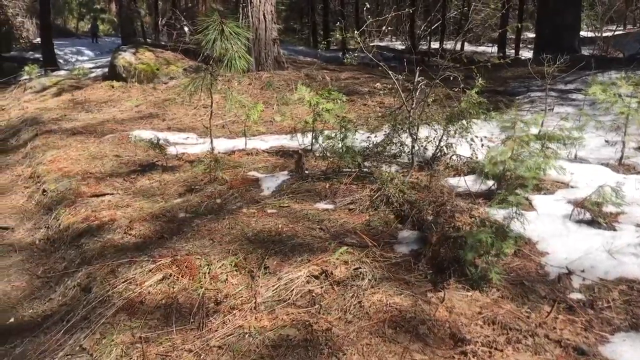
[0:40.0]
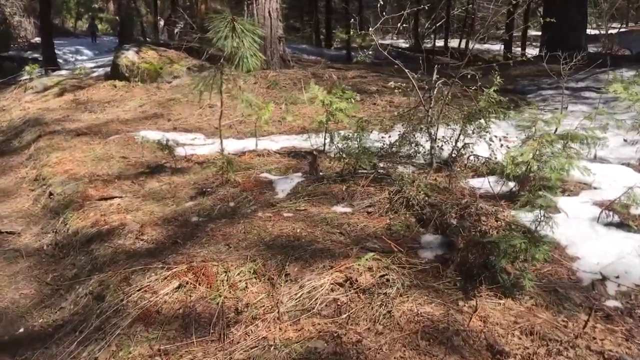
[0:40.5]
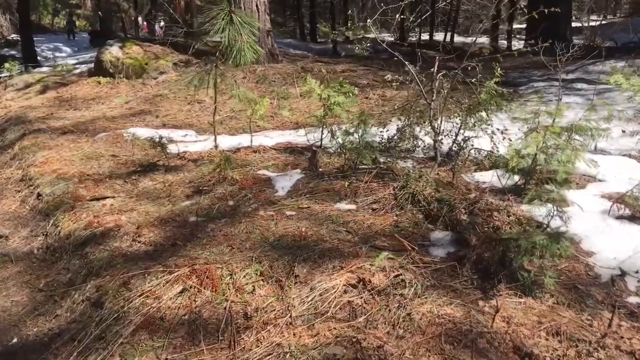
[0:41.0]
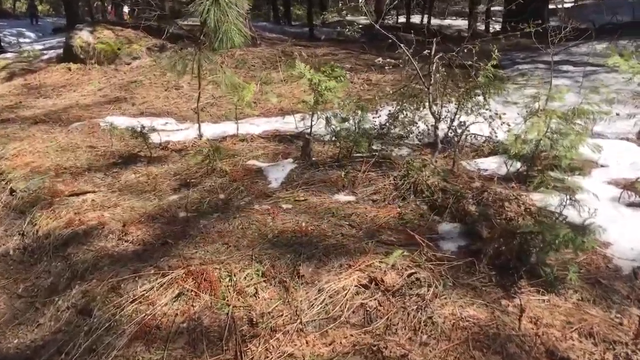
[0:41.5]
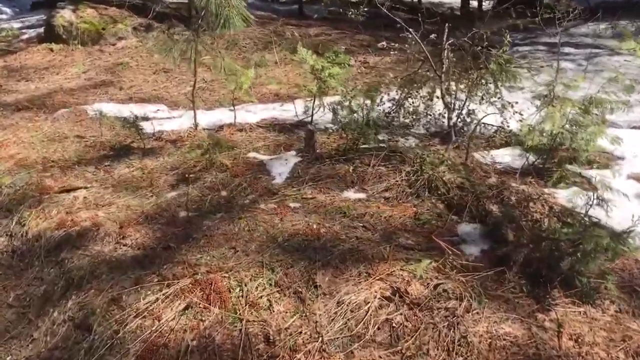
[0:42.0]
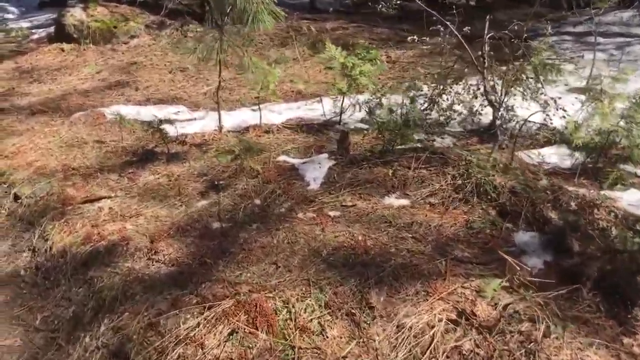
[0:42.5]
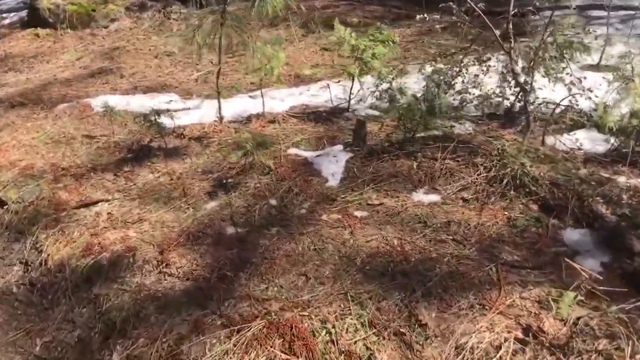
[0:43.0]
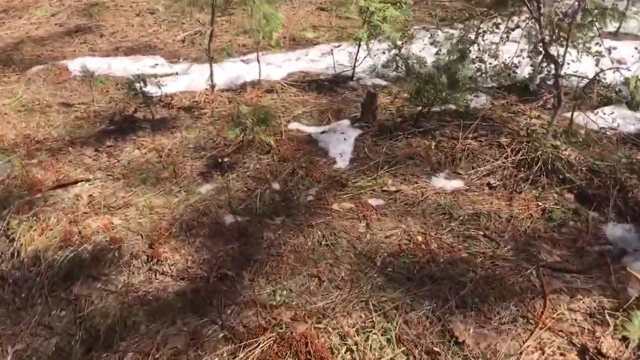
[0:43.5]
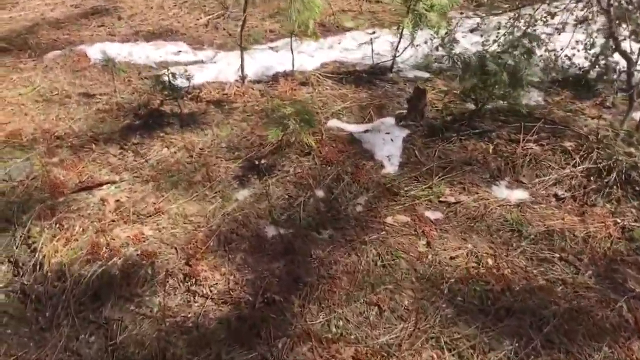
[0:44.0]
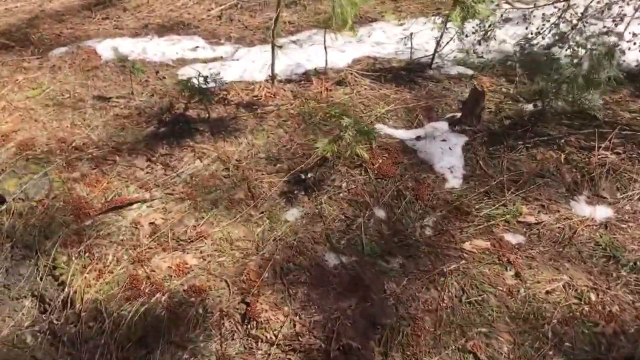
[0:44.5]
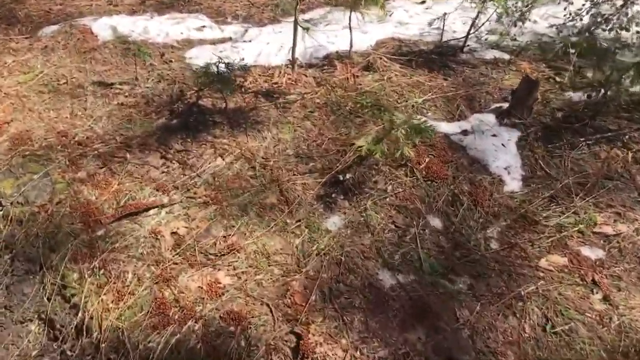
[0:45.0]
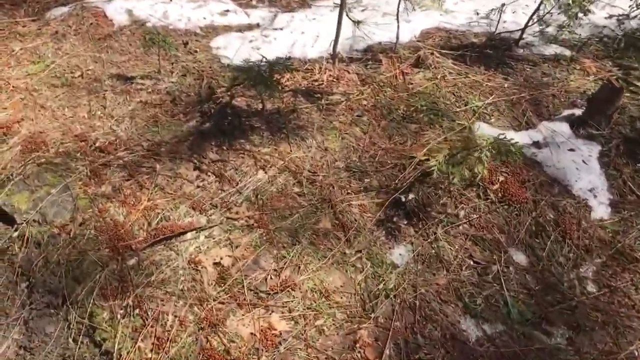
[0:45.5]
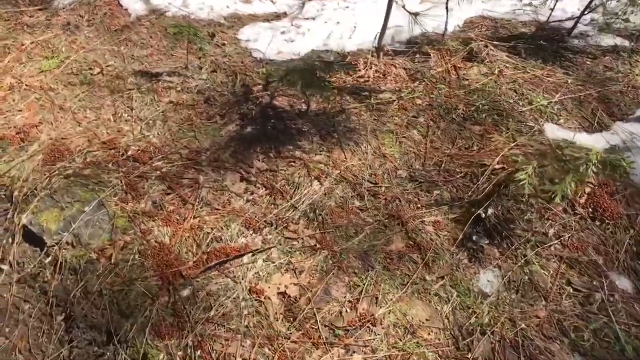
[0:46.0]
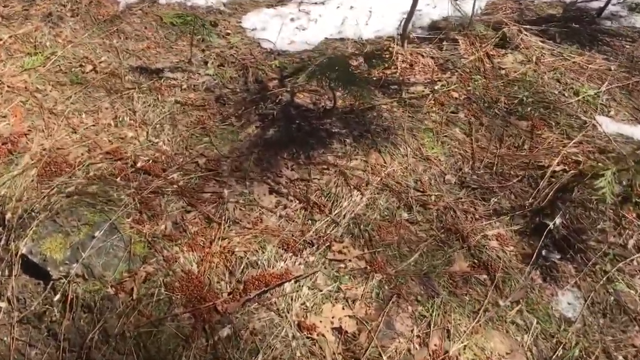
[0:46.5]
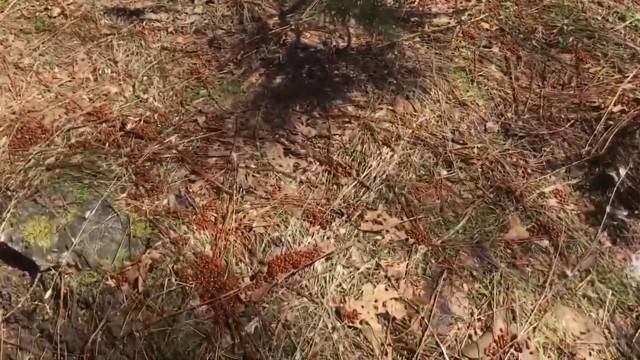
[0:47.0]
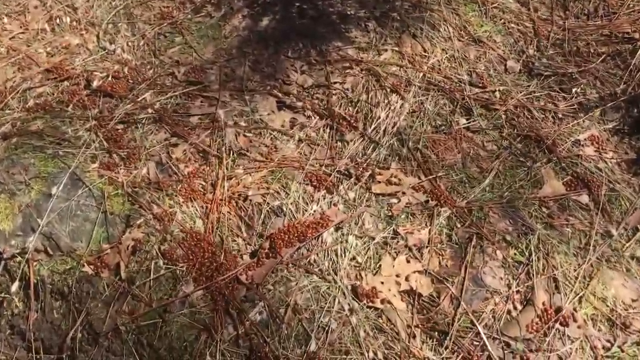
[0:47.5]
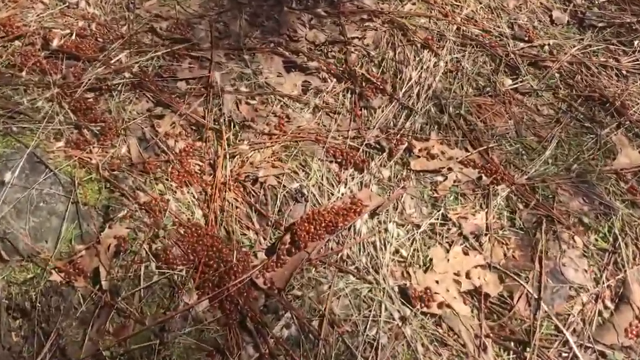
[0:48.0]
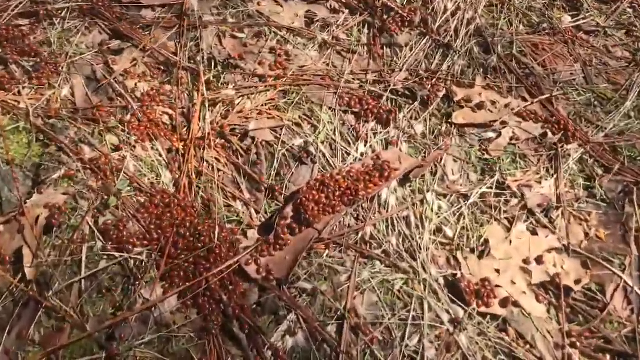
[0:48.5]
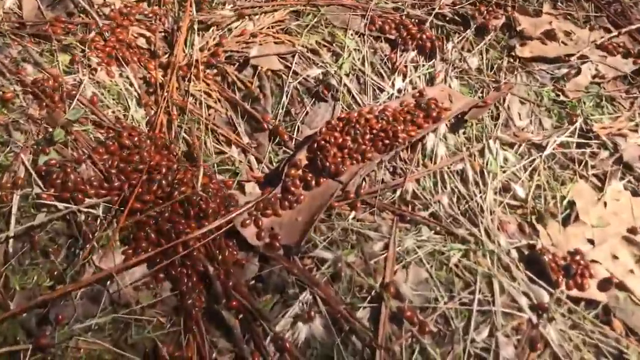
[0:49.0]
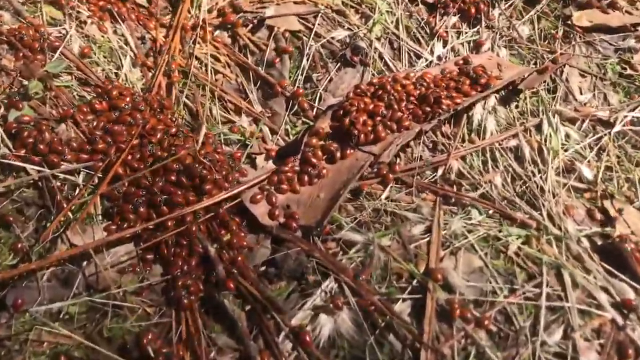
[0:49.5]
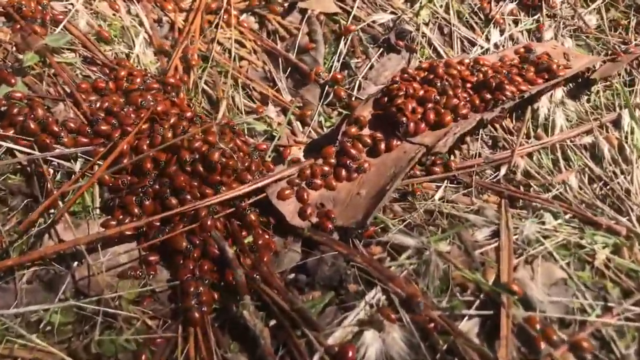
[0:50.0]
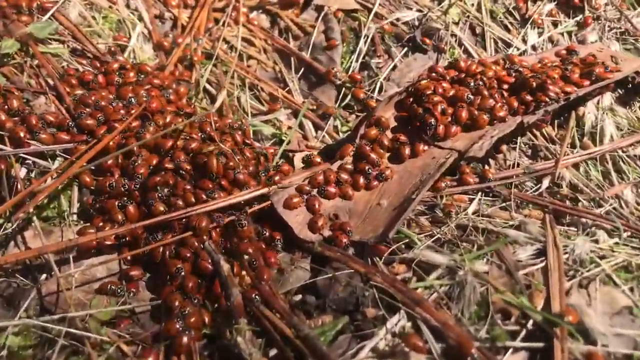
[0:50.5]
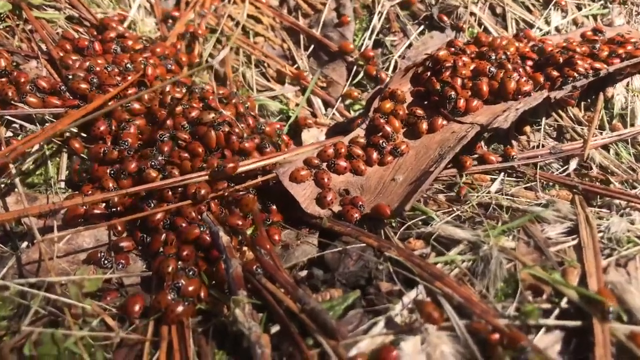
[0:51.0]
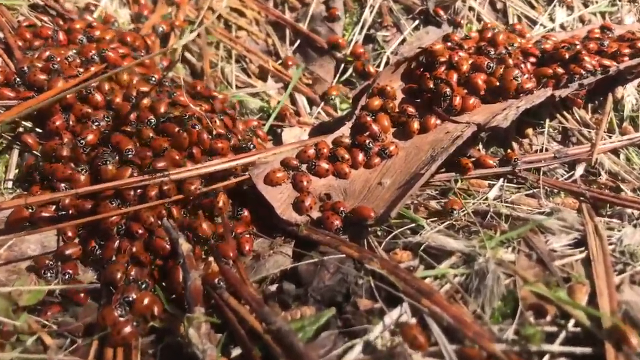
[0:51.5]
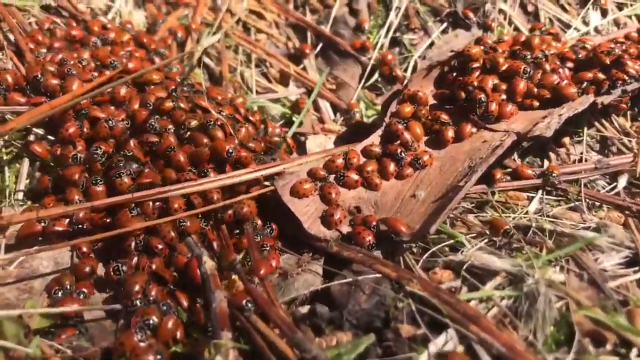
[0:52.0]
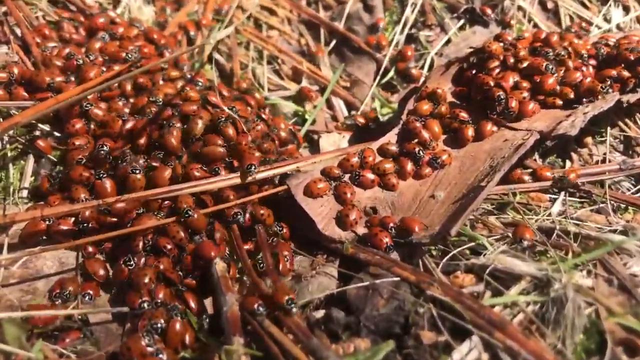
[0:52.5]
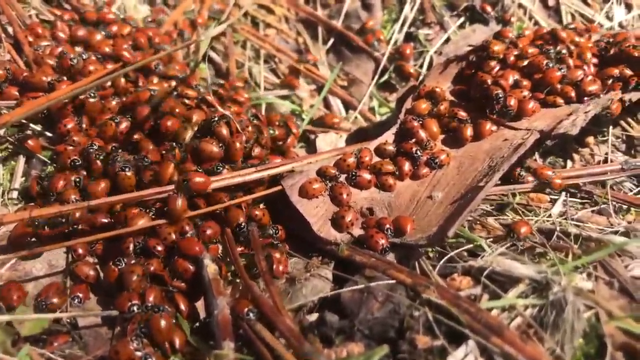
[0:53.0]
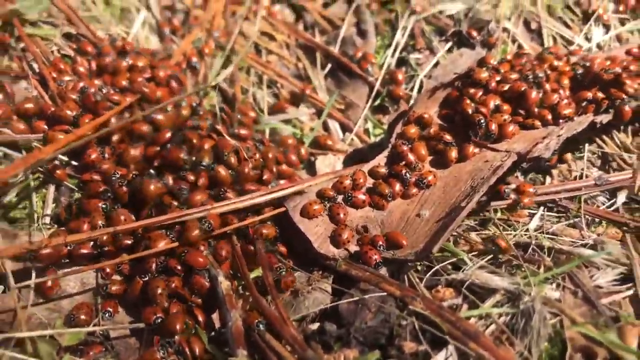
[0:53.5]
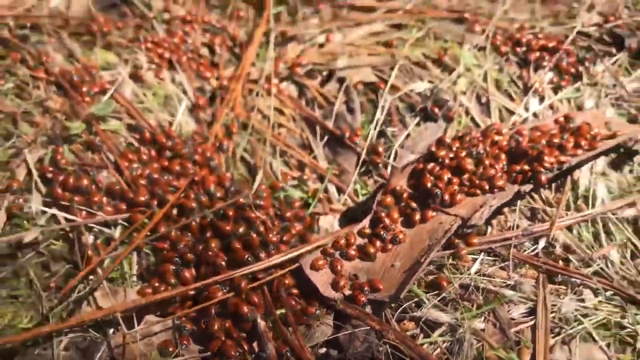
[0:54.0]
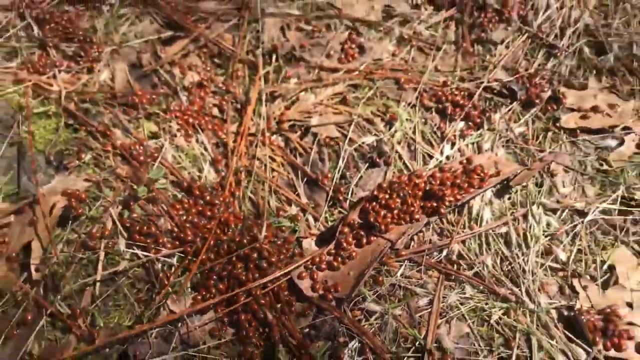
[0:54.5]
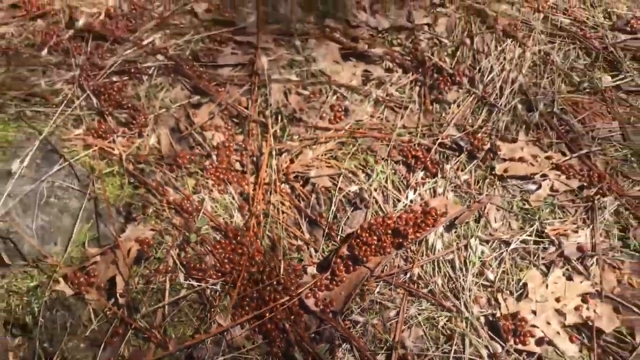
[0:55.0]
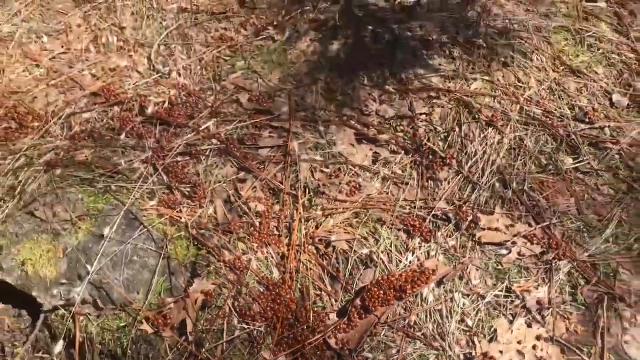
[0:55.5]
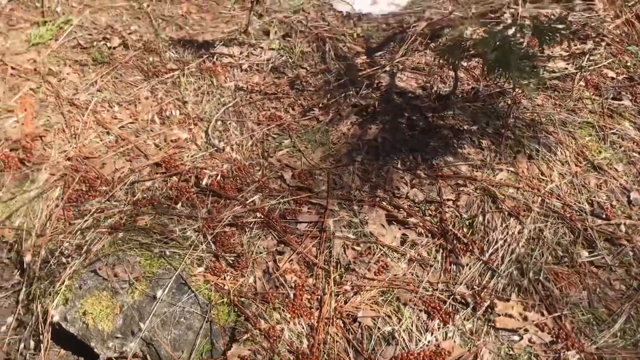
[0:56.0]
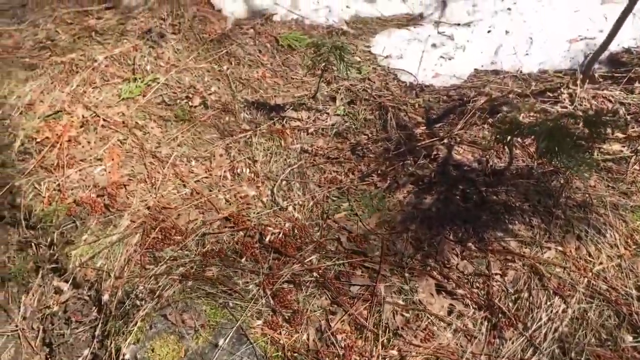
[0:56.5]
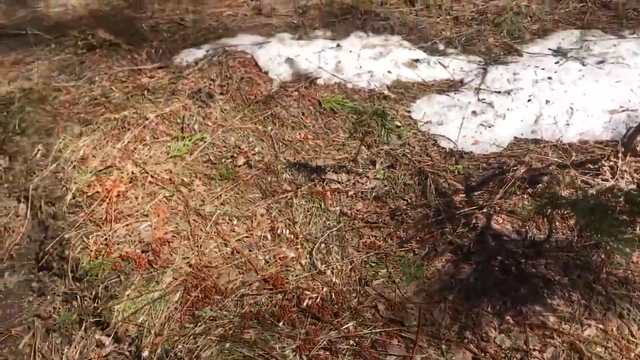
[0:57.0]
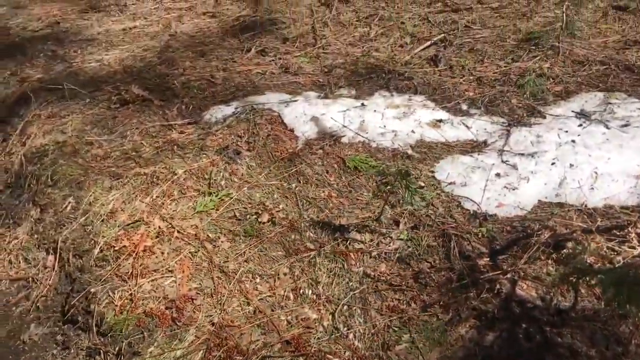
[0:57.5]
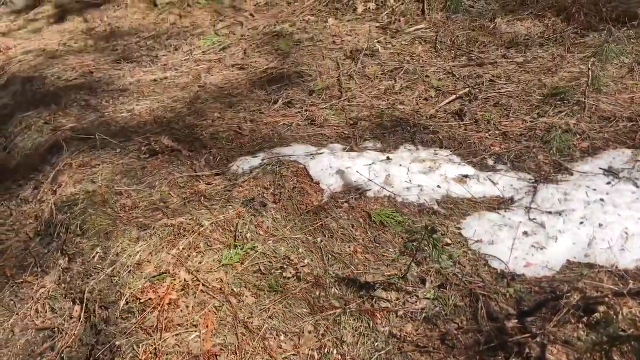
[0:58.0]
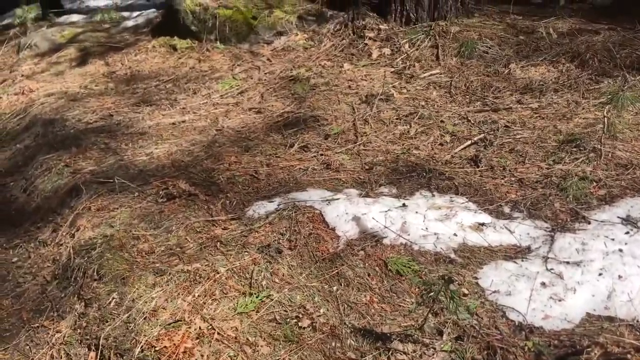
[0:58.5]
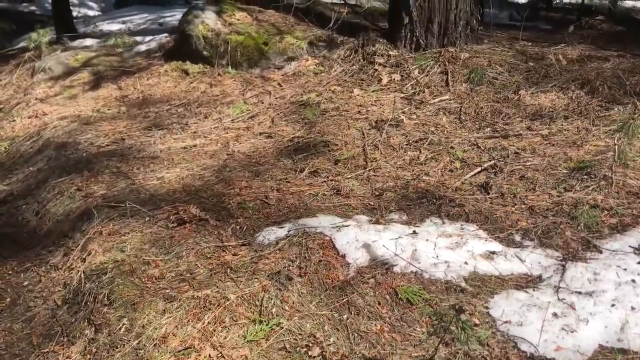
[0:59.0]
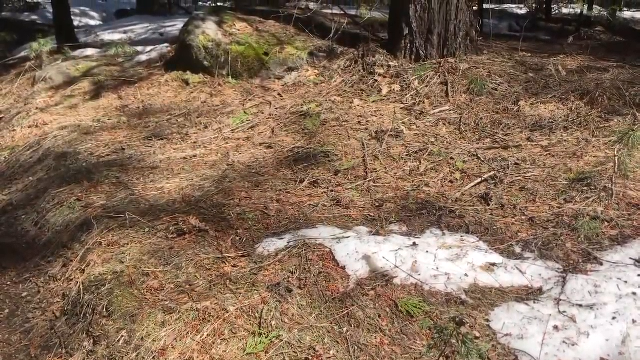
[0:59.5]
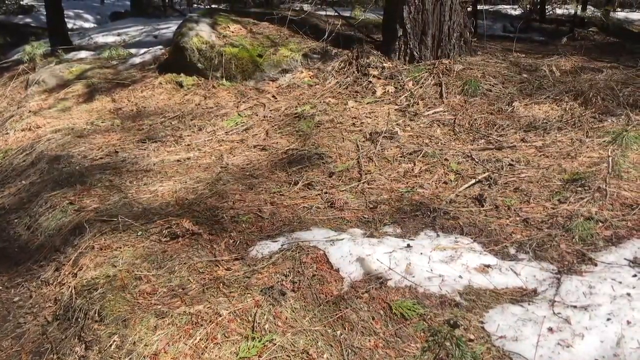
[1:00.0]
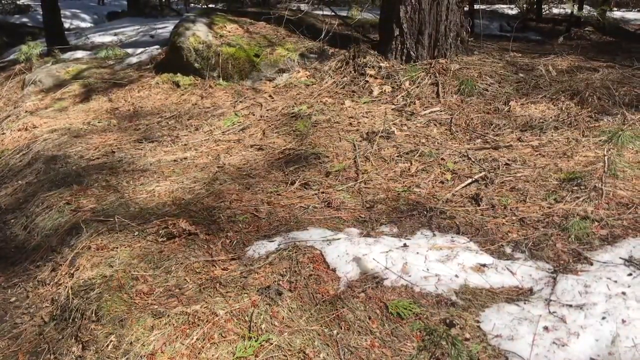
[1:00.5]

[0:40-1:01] The cameraman walks forwards towards the large patches of snow and greenery in the mid-ground, then zooms in towards the ground at a different location. Here a few hundred of the little red, kidney-bean-like bugs with black heads crawl on top of a brown leaf that has fallen on the floor. As the camera zooms in and focuses, little black dots can be seen, which might be either markings or mites, covering the bugs as they crawl on each other and the bark. The cameraman then stands up, zooming away from the bugs and panning back up to the trees and snow, now from a closer angle since he has stepped closer.